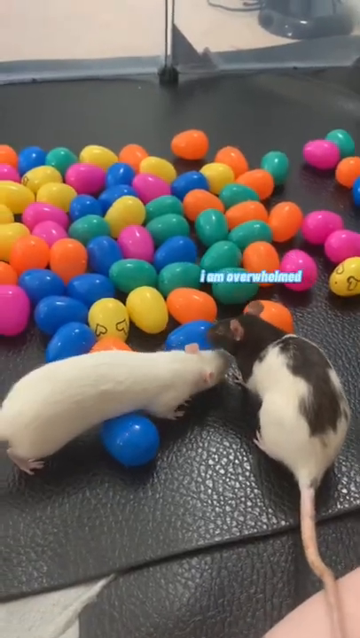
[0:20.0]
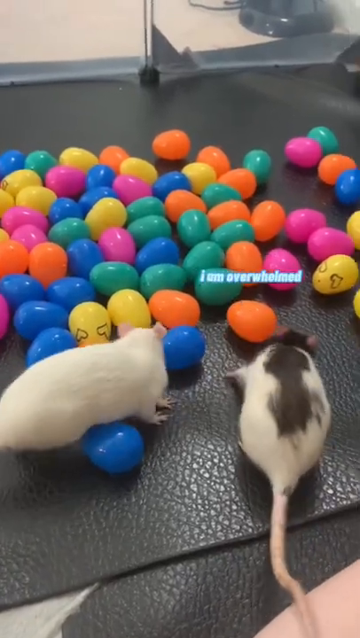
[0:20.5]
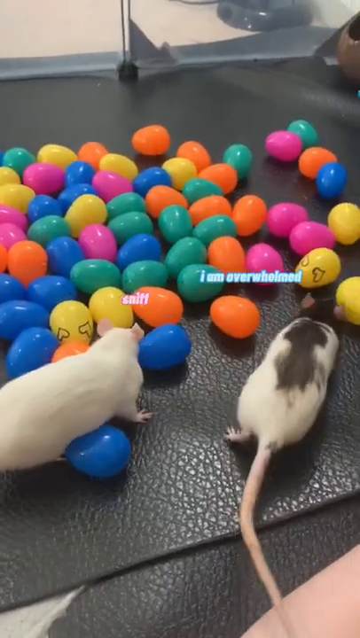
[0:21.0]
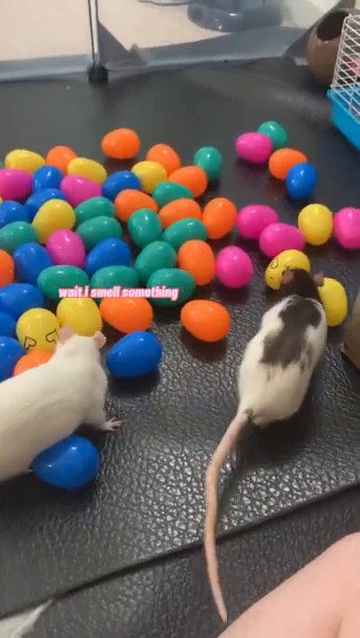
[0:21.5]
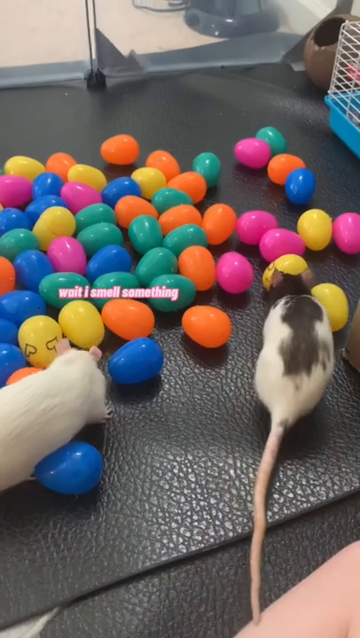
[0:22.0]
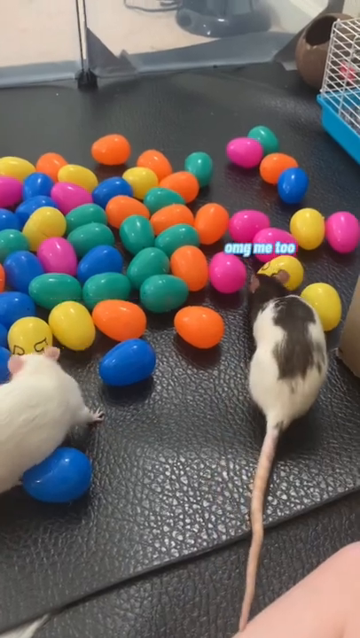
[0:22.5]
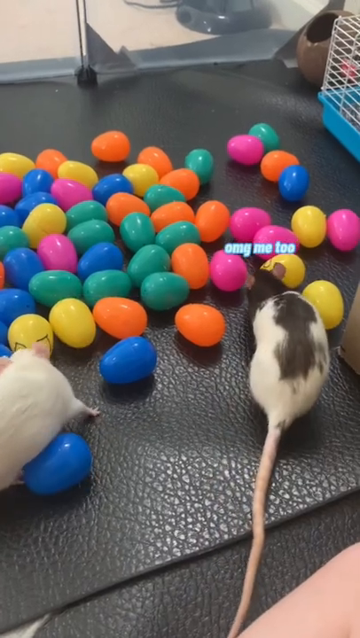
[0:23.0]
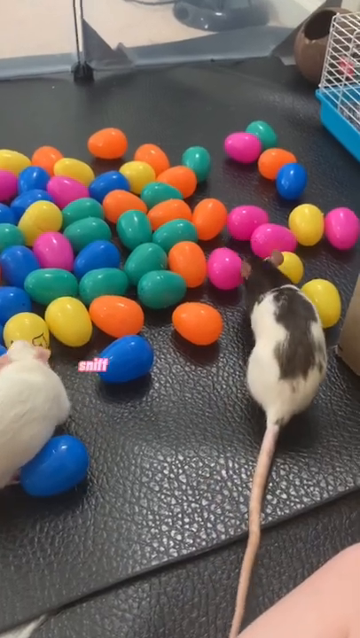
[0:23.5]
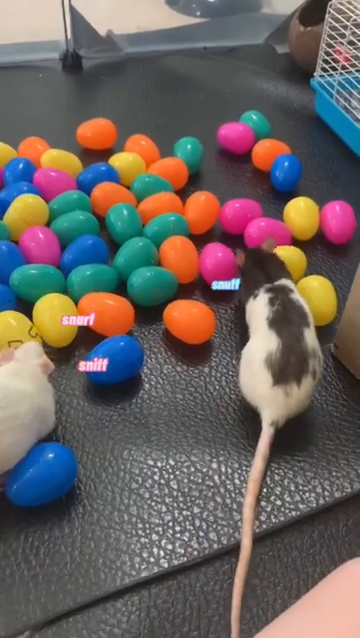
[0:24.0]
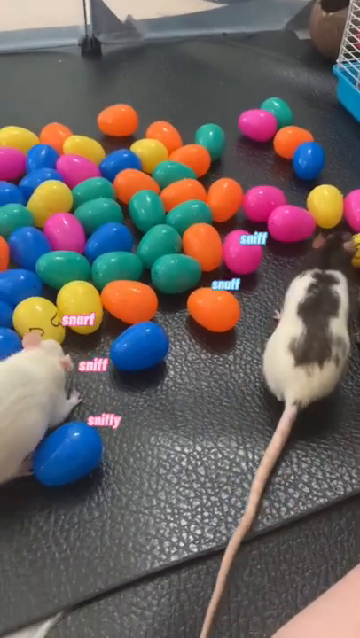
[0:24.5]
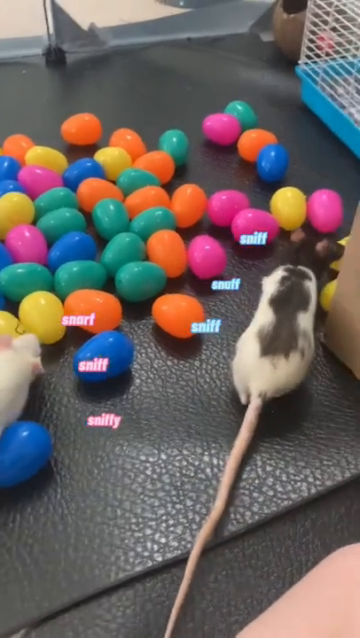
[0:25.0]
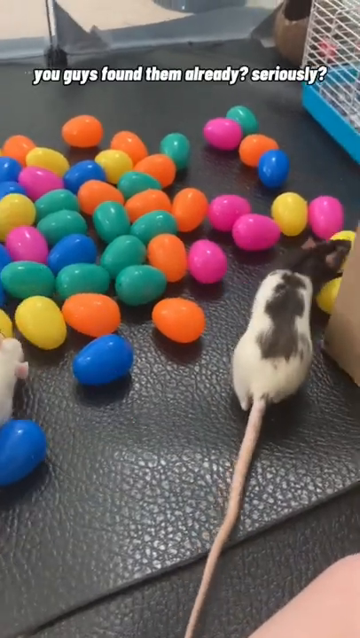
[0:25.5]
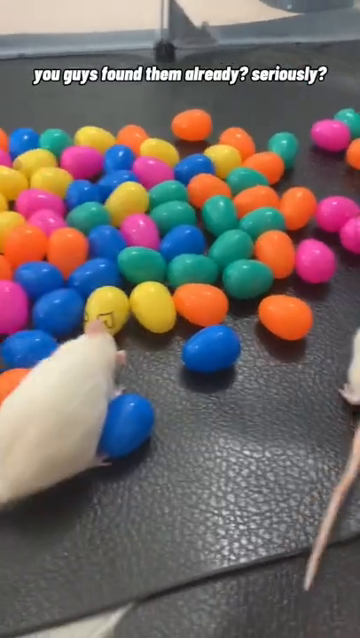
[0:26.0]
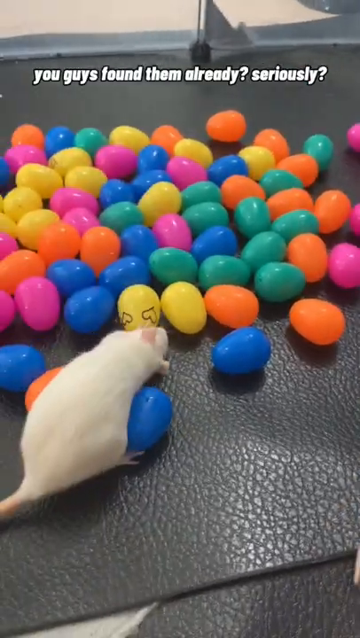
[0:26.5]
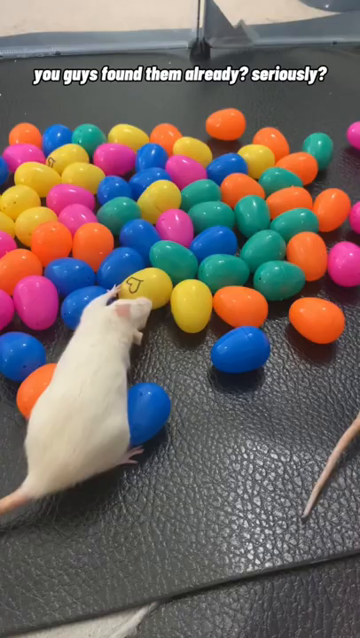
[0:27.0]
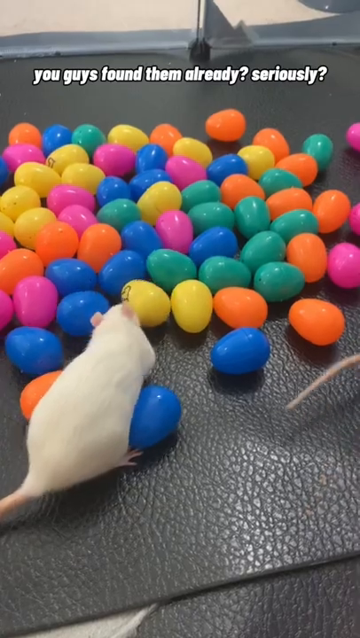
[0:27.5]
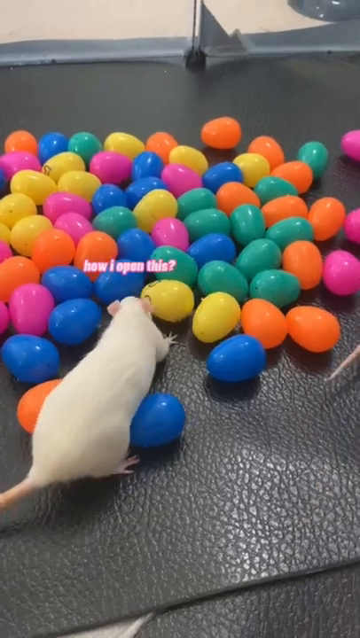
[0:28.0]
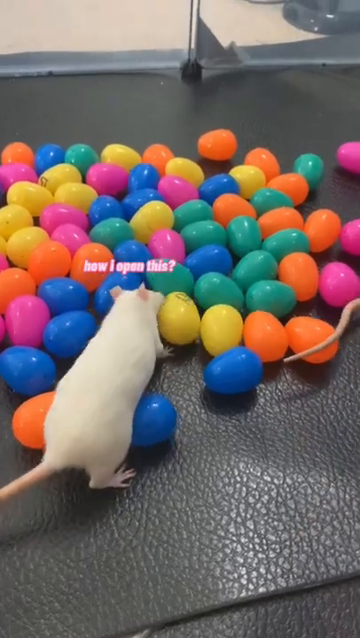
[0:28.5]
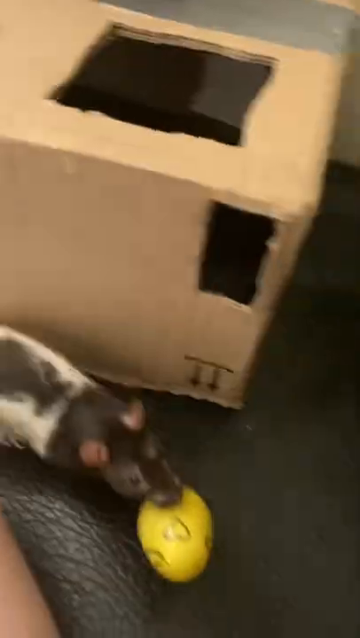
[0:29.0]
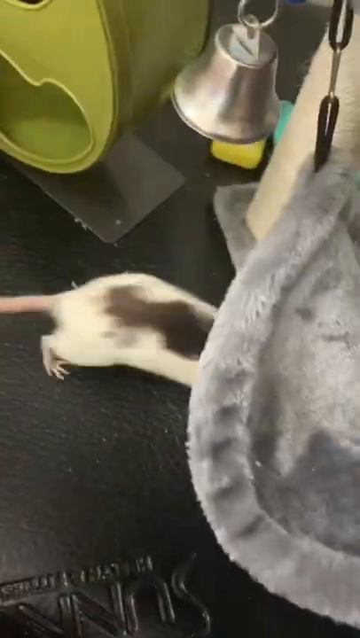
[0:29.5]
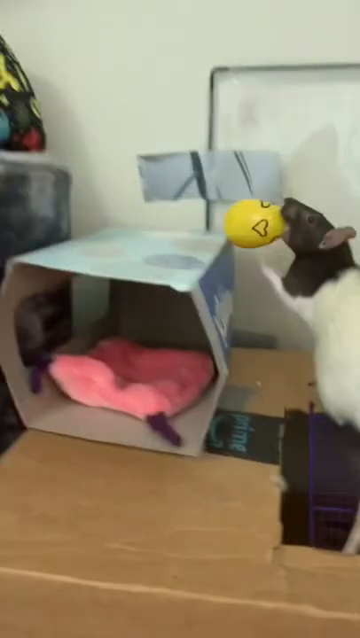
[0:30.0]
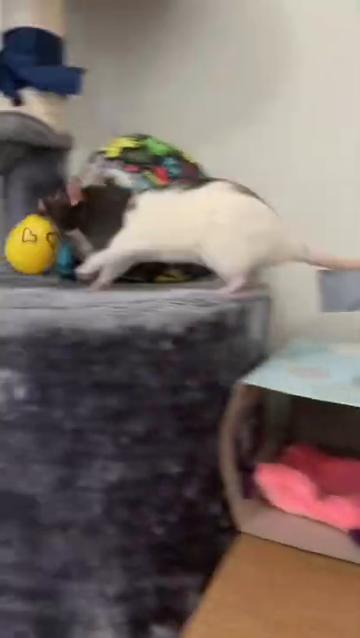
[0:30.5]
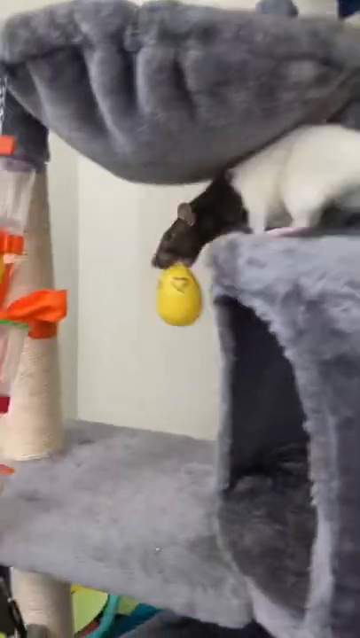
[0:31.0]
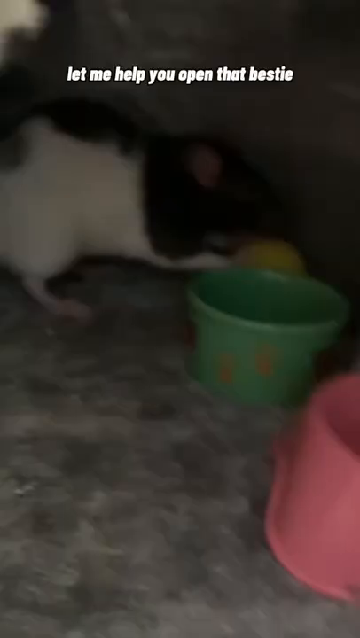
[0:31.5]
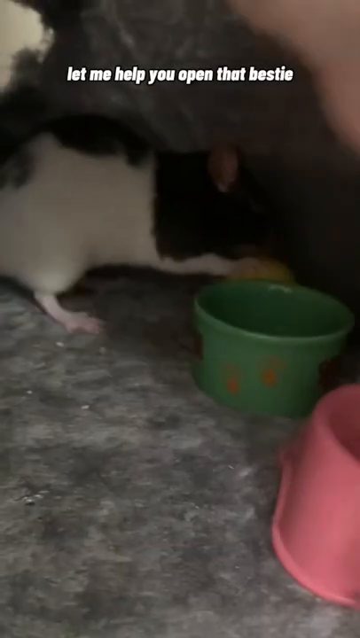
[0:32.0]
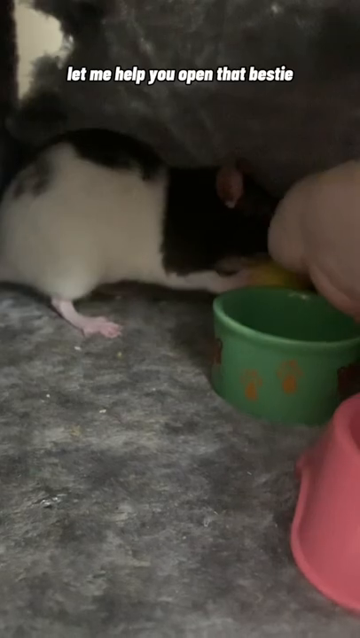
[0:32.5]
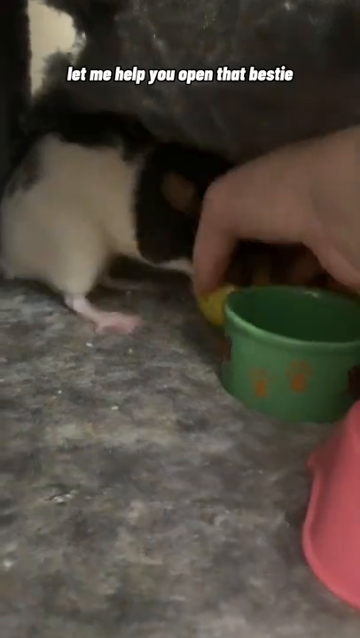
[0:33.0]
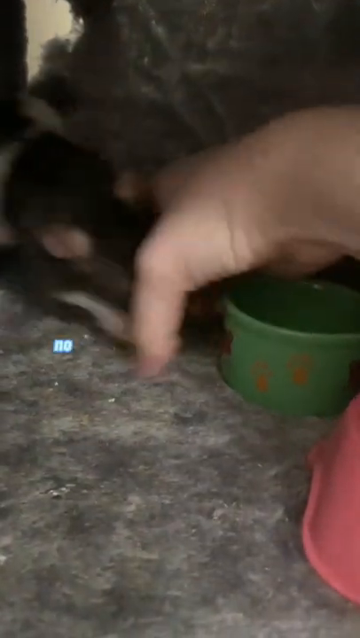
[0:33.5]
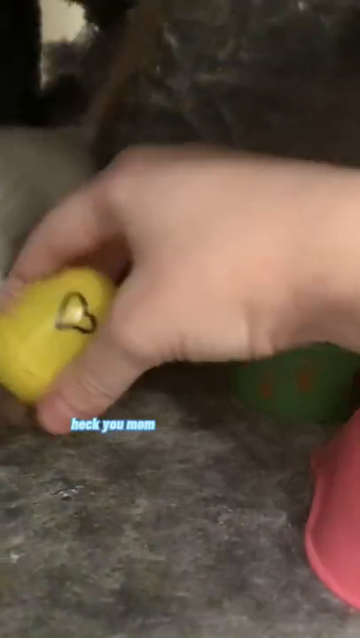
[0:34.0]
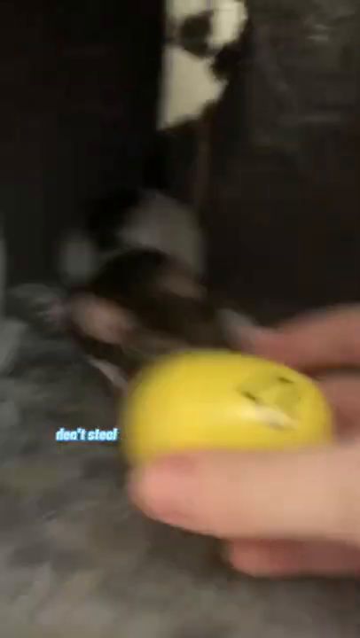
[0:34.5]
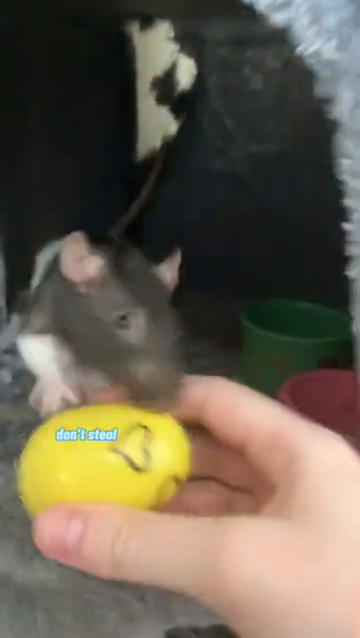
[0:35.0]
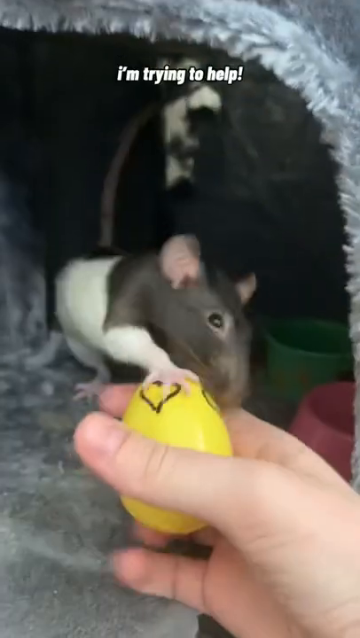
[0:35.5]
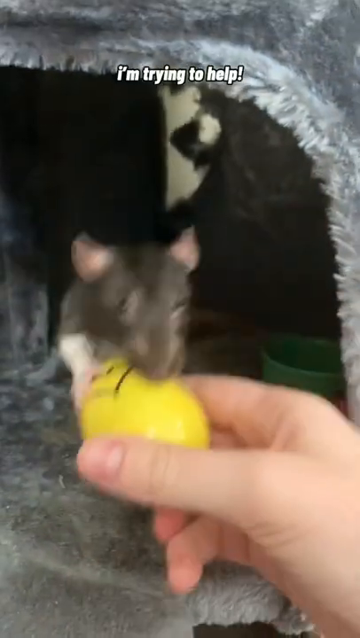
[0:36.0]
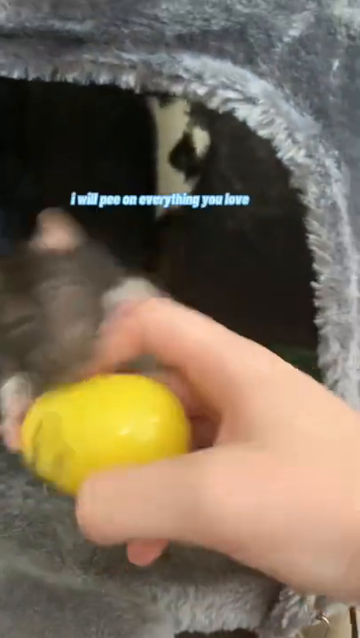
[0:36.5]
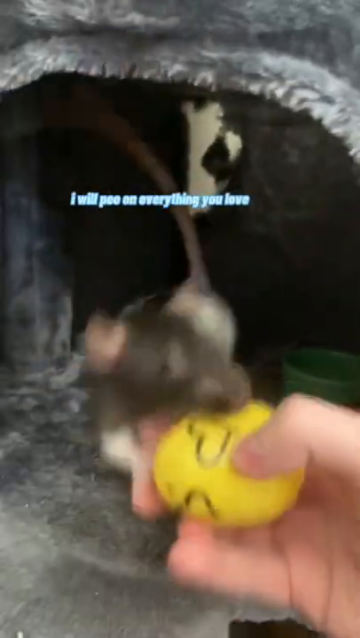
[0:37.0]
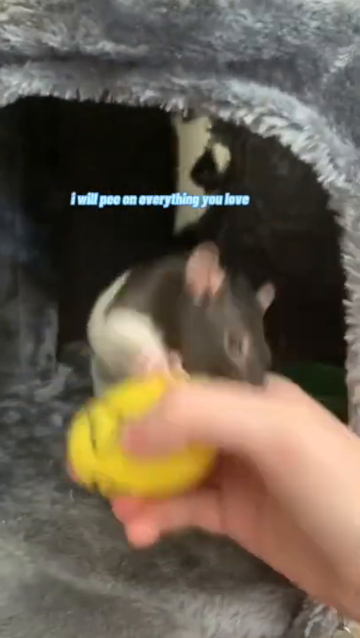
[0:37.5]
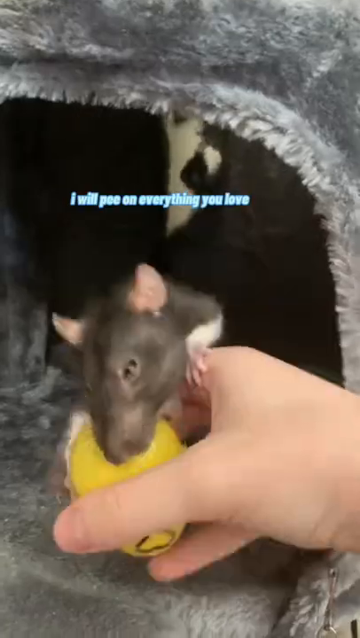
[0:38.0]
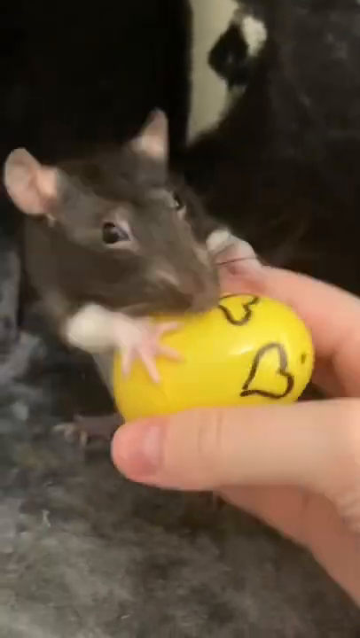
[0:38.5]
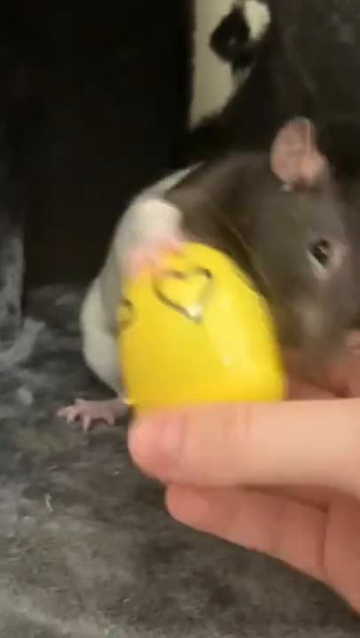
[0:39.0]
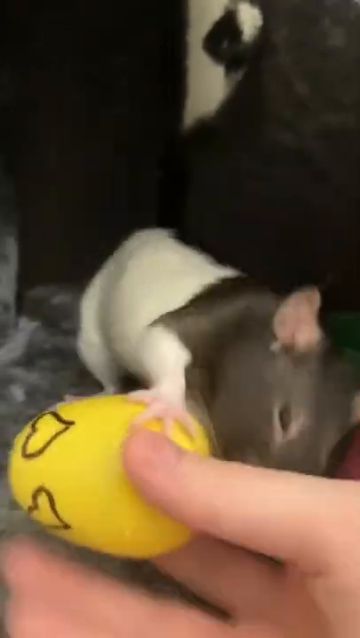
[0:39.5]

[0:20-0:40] The two rats, the white one and the white and black one, work diligently through the pile of colorful toy eggs to find the egg with the food in it. It does not take long: the white rat finds that the yellow egg with a face on it is the one holding the food. However, the white and black rat ends up taking it and will not let the toy egg go, holding on to it desperately as the owner tries to take it back.